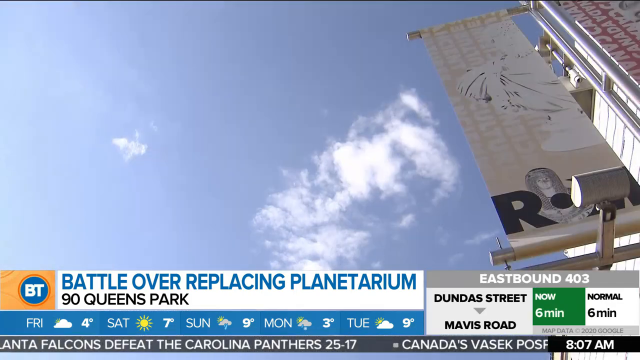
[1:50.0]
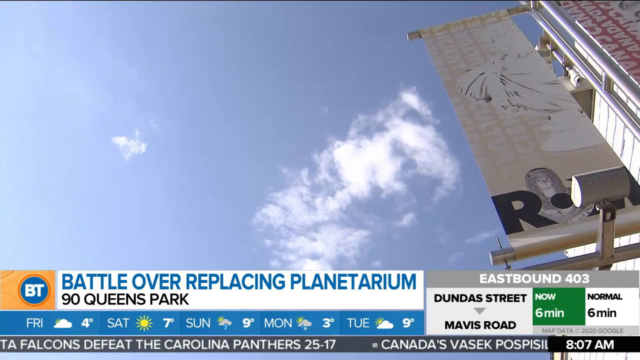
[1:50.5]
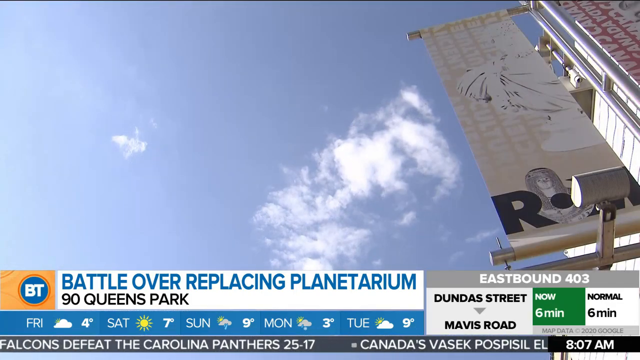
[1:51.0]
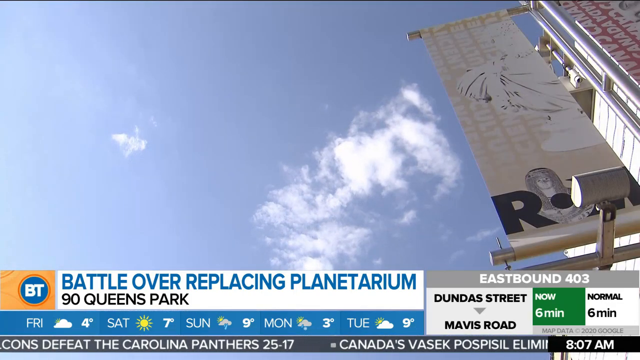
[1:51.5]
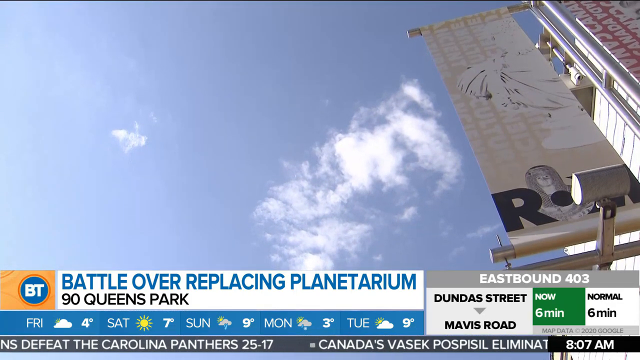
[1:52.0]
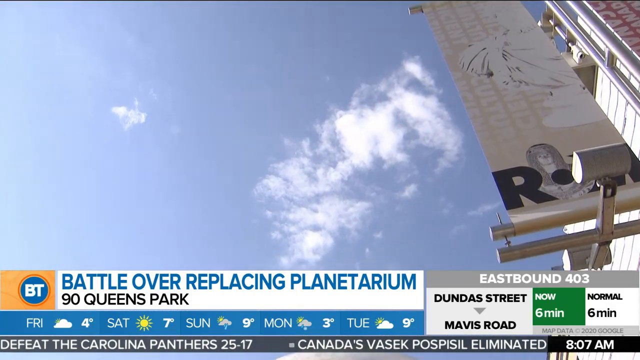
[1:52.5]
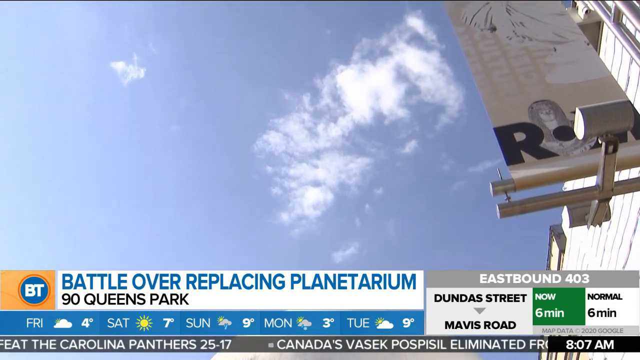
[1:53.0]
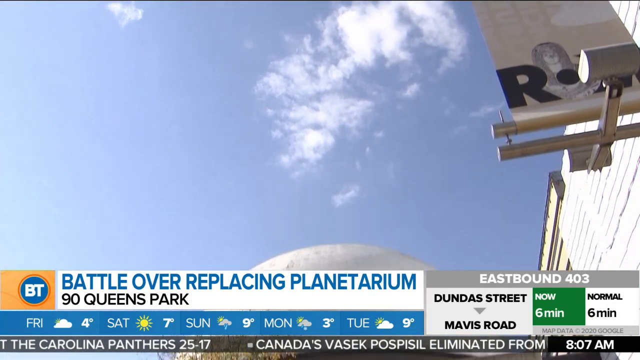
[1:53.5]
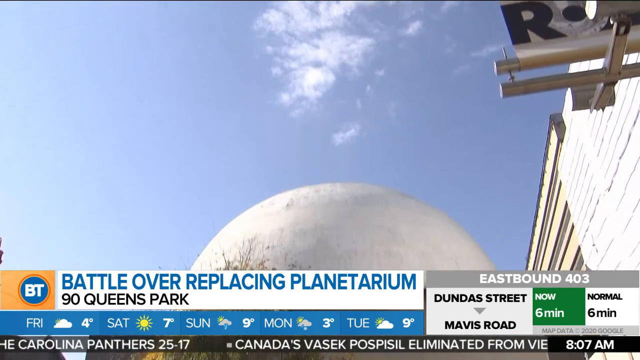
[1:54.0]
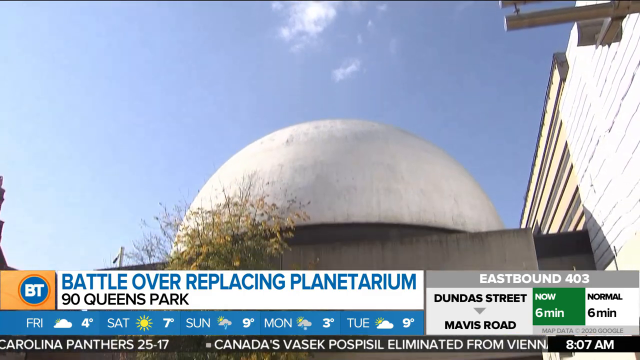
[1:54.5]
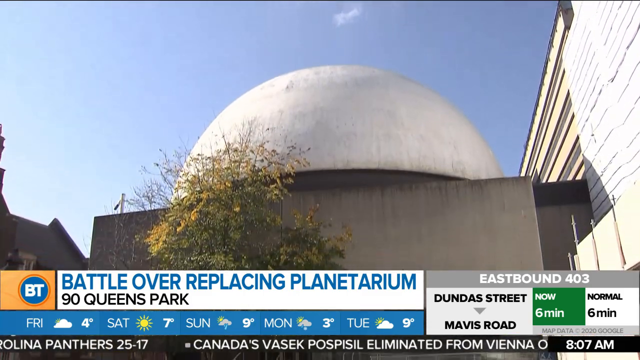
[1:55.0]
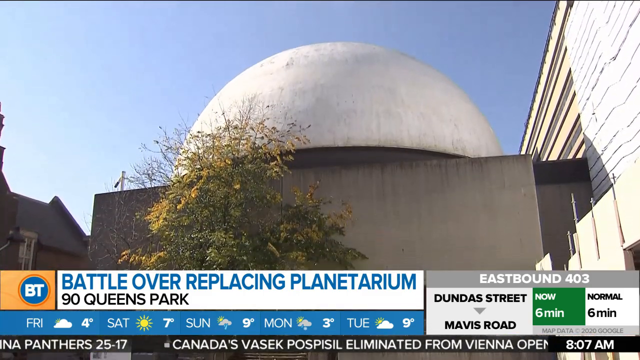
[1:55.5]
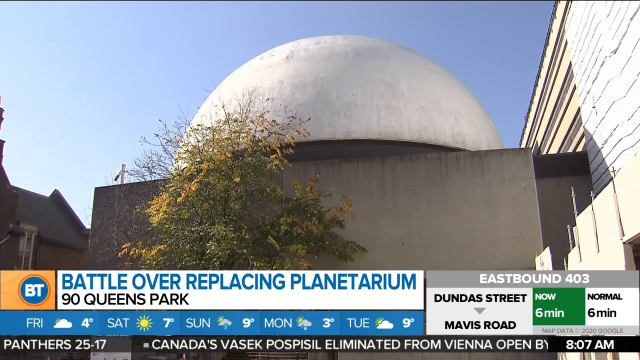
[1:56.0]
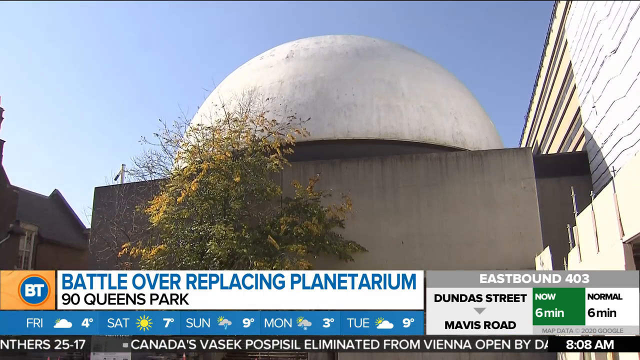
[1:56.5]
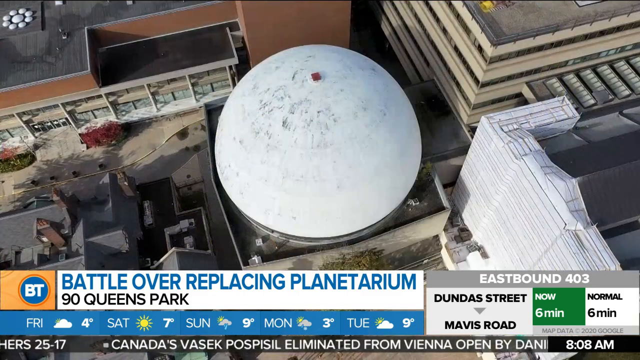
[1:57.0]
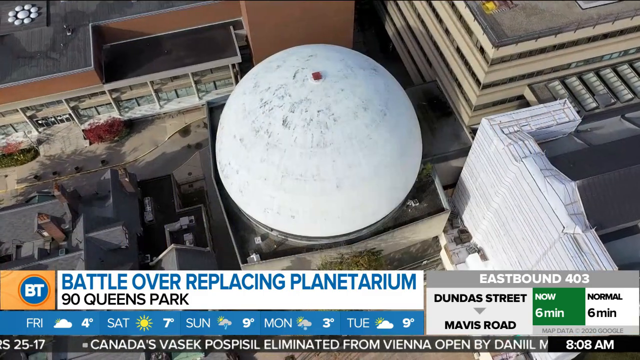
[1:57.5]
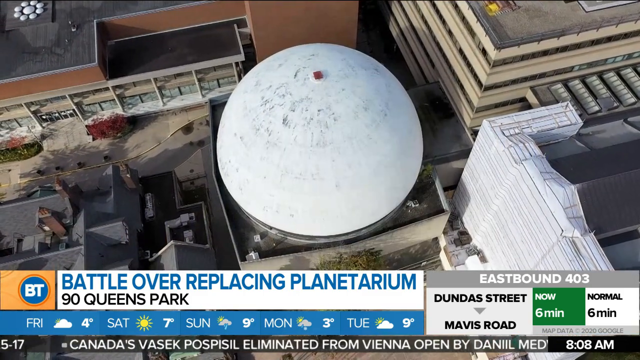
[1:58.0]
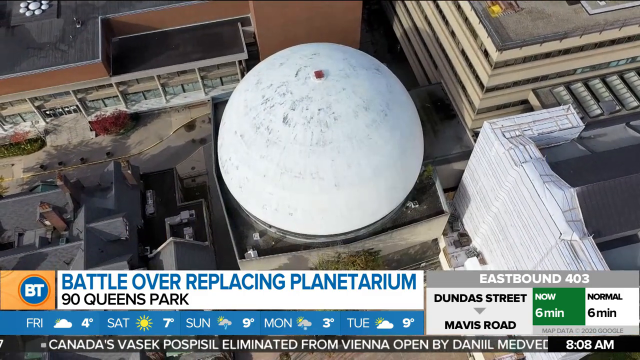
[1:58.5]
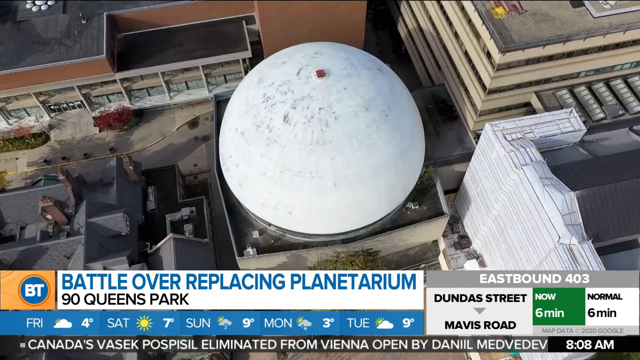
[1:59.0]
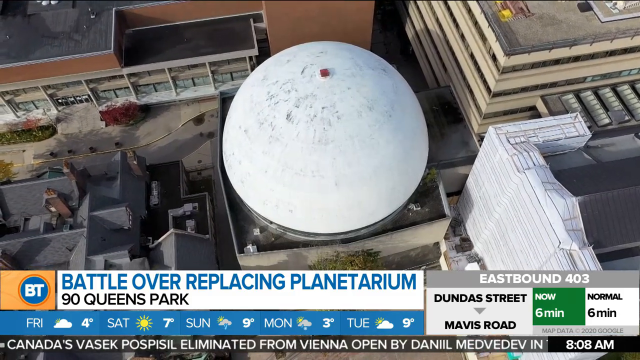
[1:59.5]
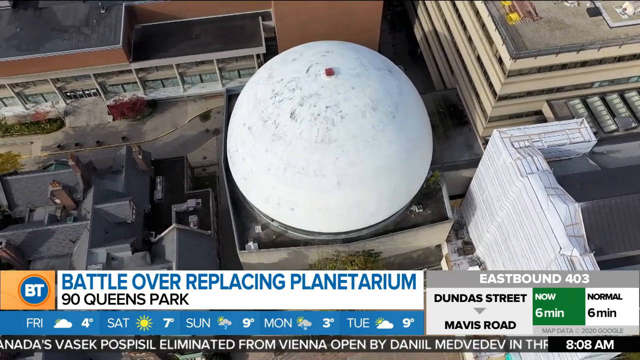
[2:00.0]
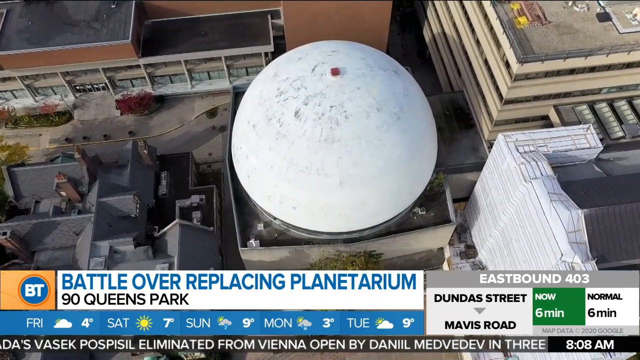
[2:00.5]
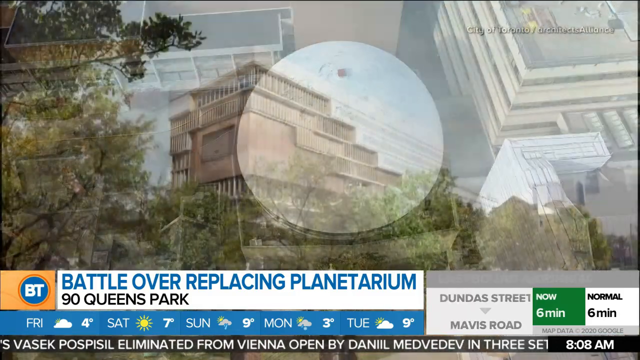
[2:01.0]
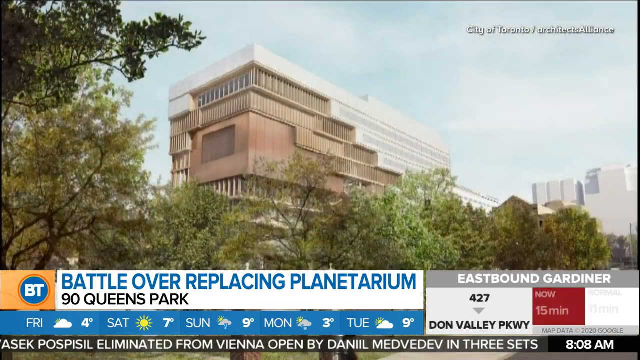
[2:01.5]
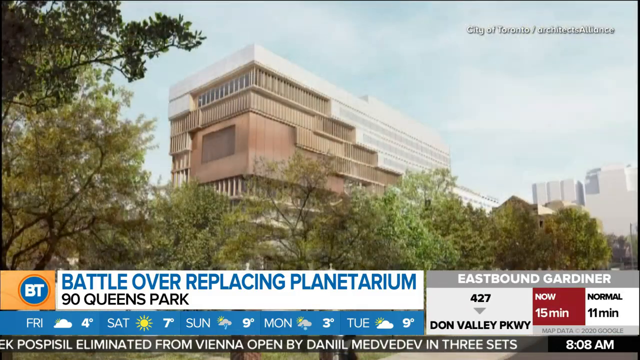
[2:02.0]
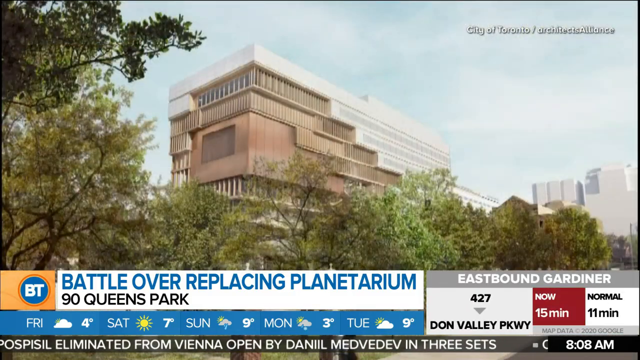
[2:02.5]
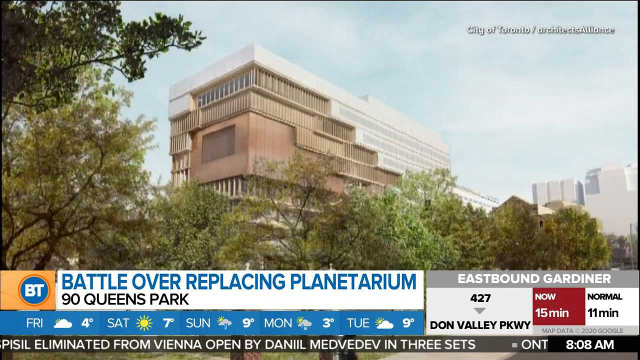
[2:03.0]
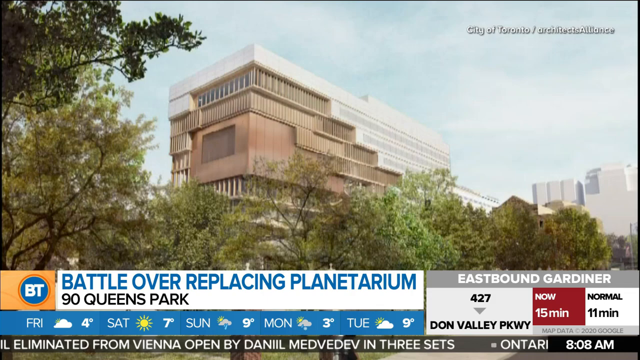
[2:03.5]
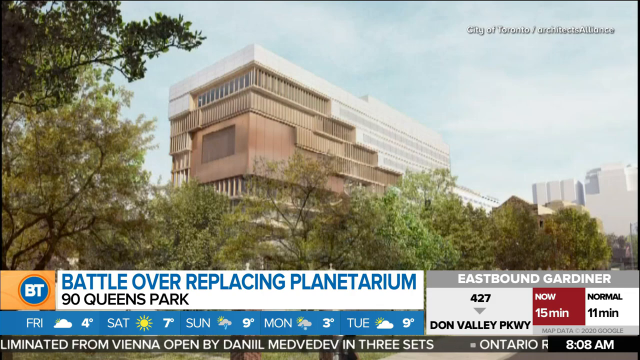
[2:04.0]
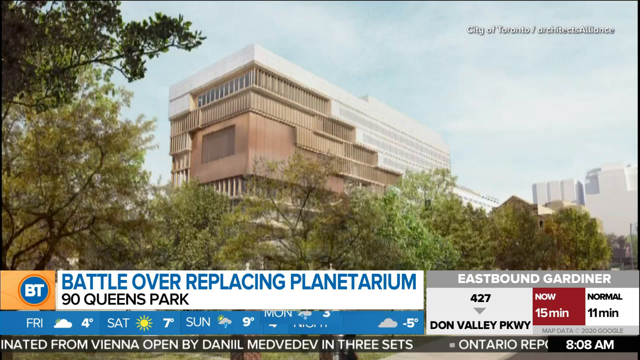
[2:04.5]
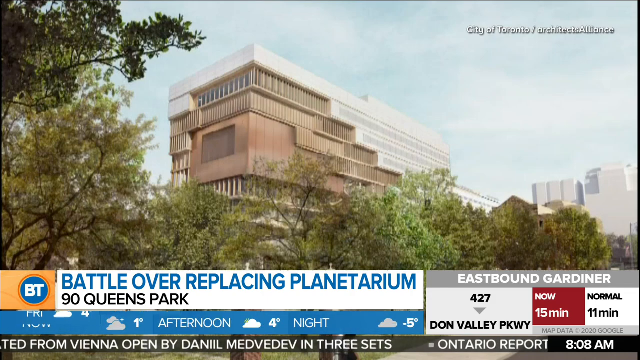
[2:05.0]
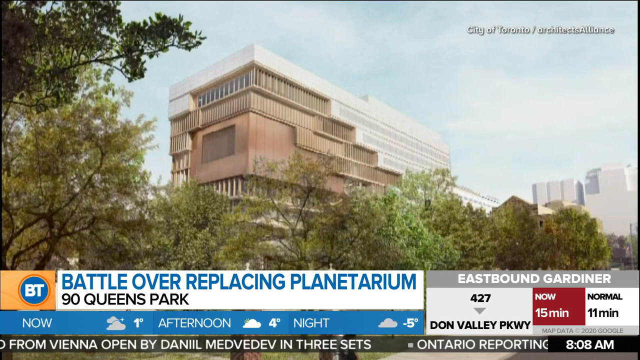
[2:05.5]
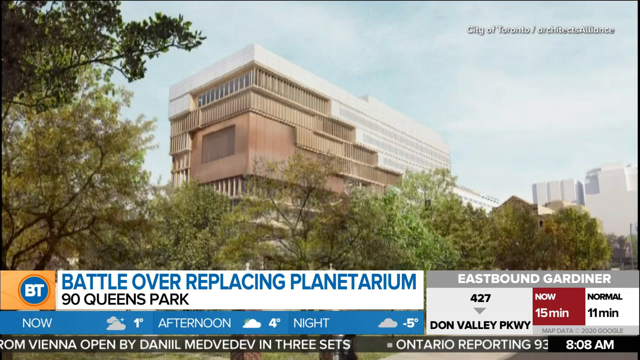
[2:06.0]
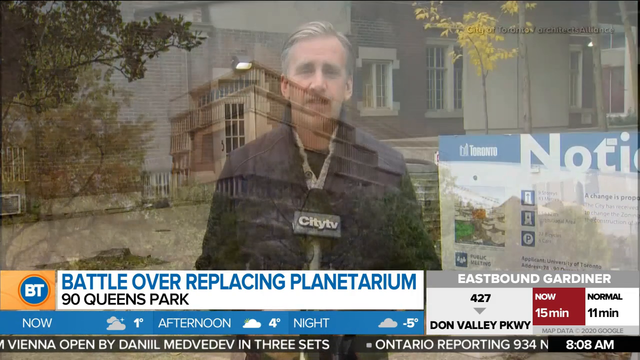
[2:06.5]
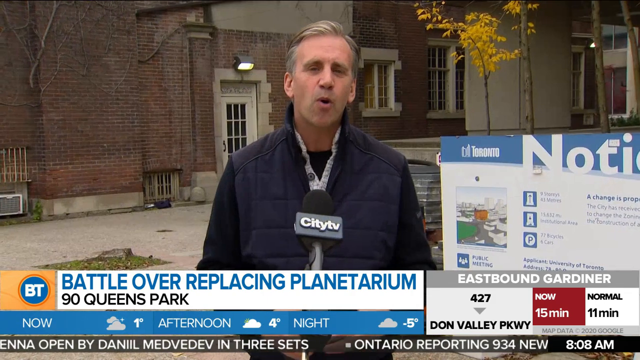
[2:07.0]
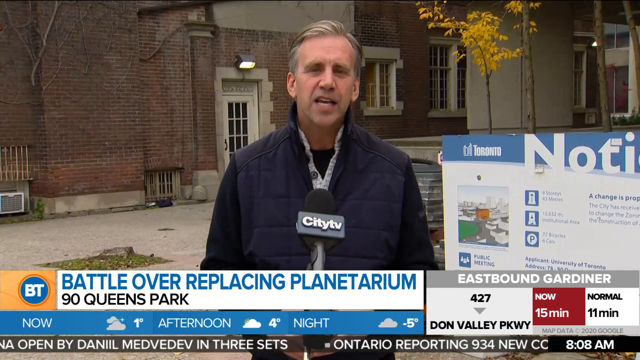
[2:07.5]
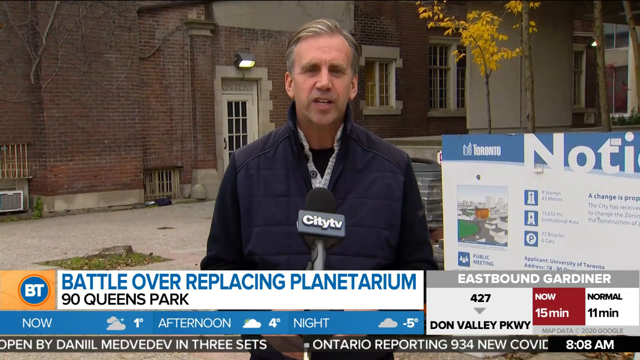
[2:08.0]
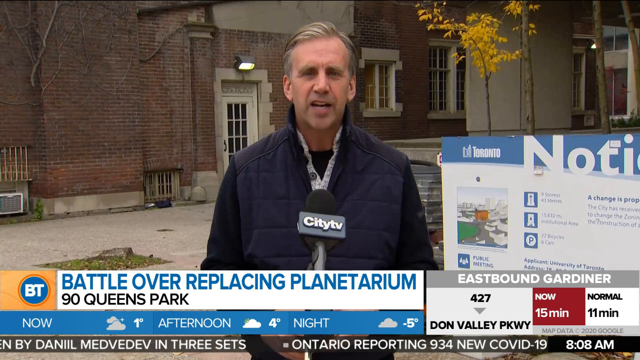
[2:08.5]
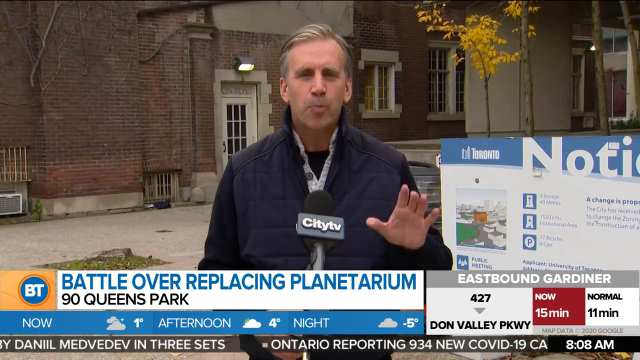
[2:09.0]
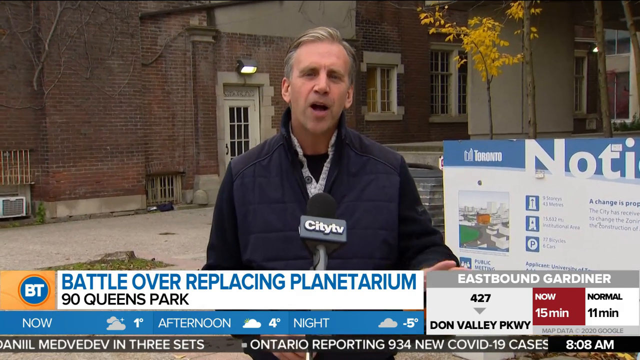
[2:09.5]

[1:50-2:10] The headline "battle over replacing planetarium" is on screen as a blue sky is shown. An aerial view shows a circular, round building, its shape round like a sun, along with different other buildings. The weather forecast and some headlines are shown at the bottom of the screen. Another building is shown, and the male presenter stands in front of the building, with a poster behind reading "notice," explaining what is happening while a headline is on the screen.